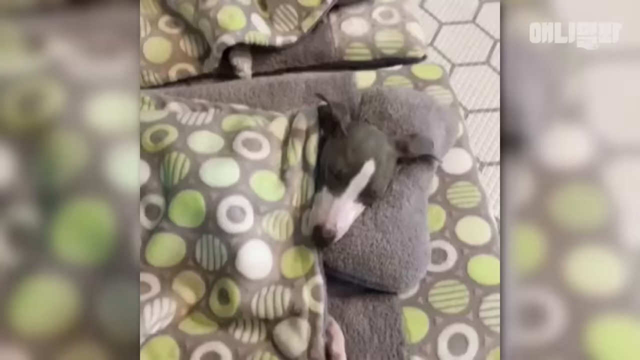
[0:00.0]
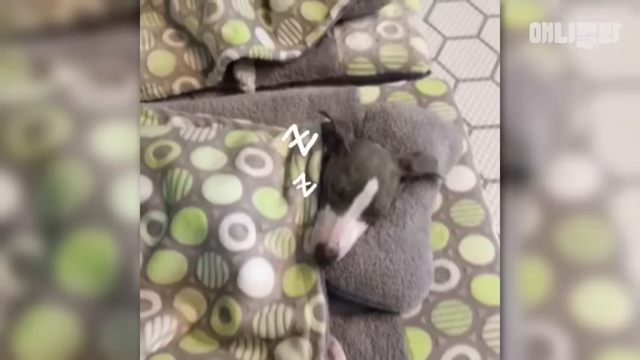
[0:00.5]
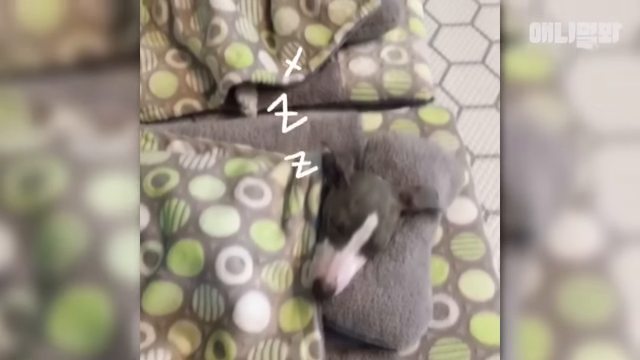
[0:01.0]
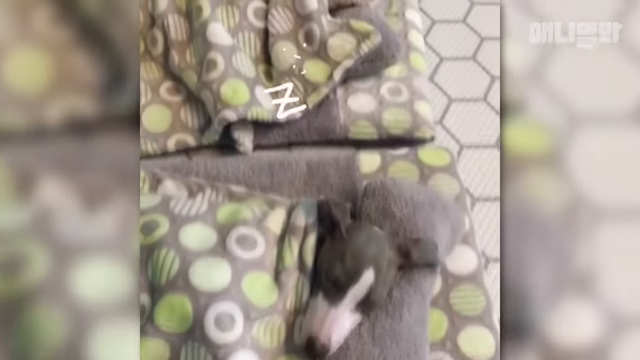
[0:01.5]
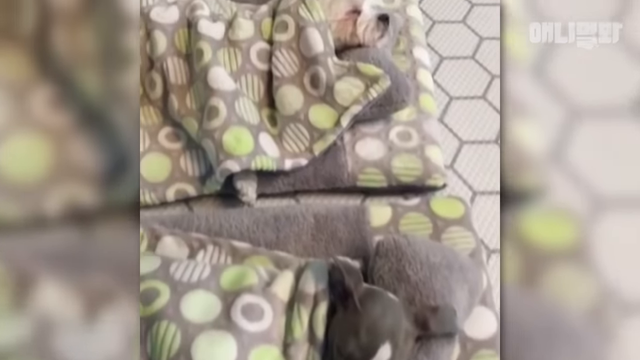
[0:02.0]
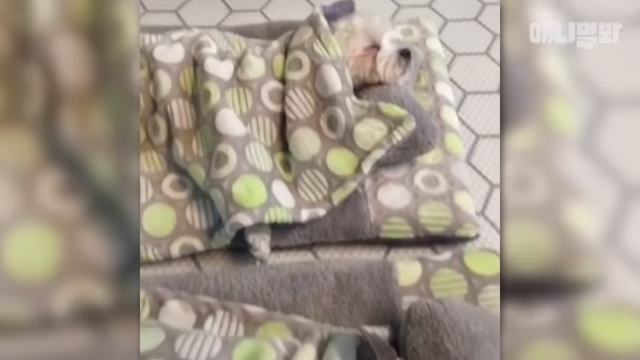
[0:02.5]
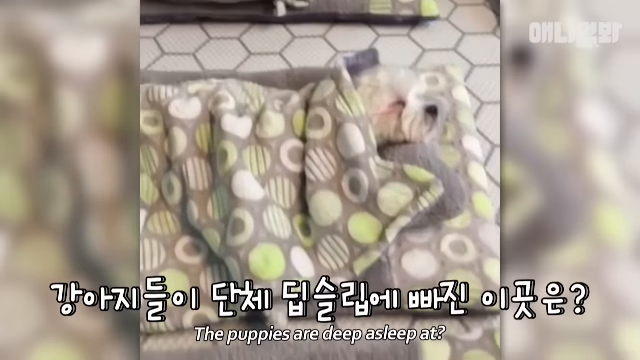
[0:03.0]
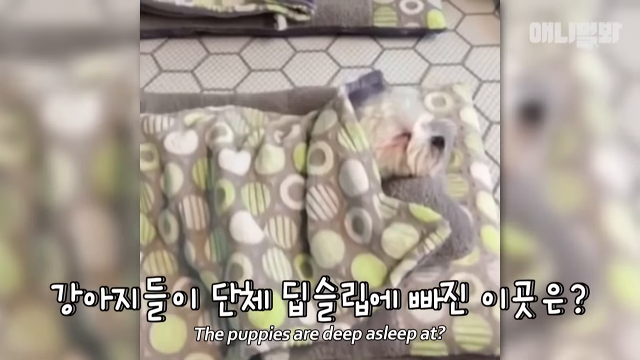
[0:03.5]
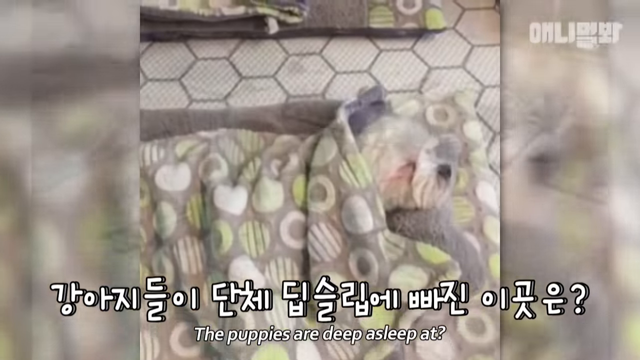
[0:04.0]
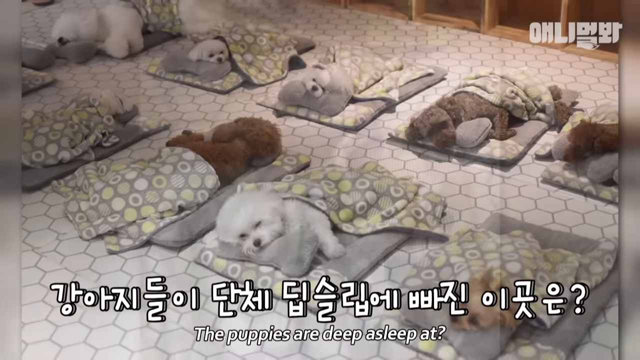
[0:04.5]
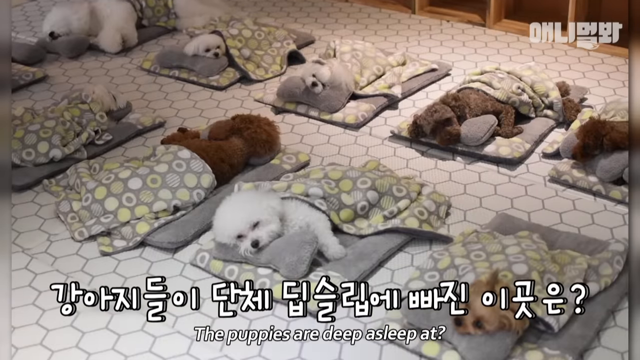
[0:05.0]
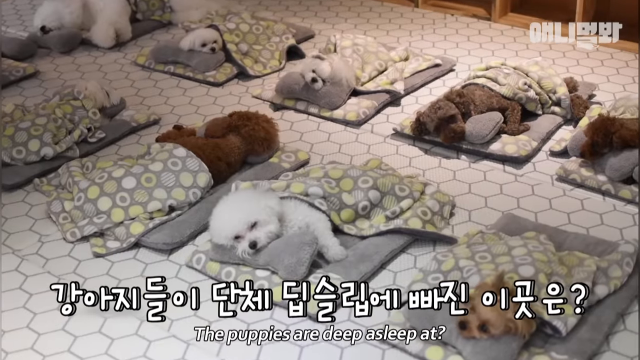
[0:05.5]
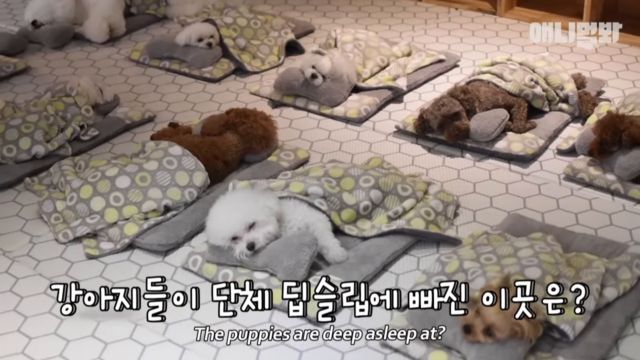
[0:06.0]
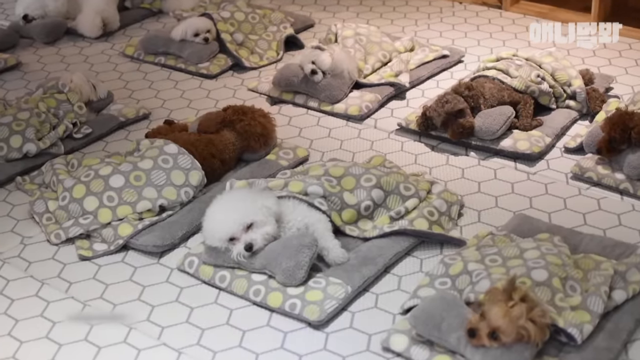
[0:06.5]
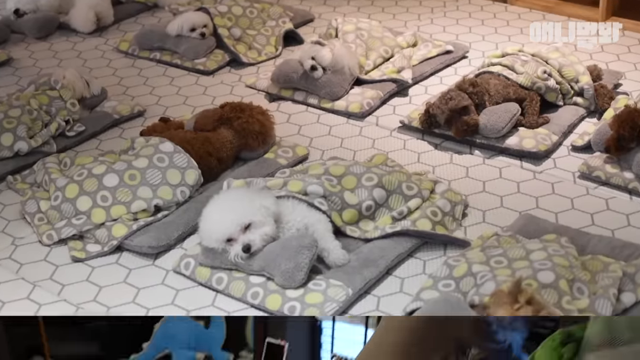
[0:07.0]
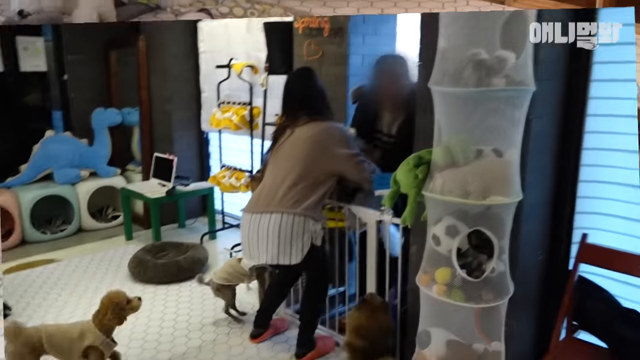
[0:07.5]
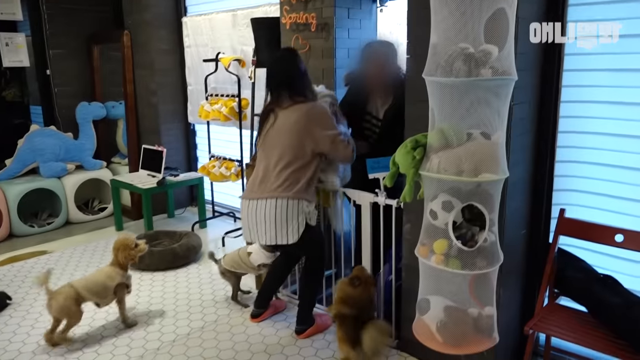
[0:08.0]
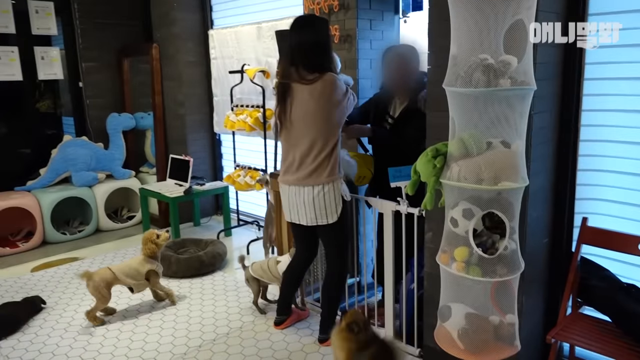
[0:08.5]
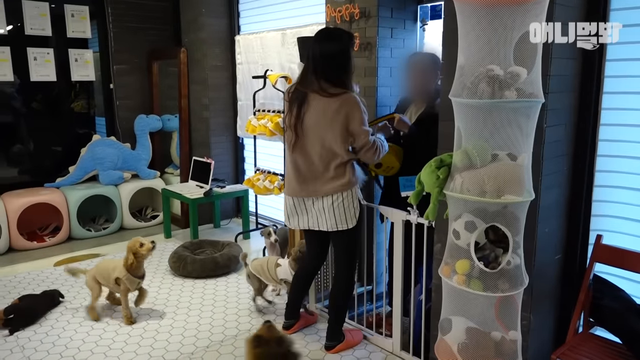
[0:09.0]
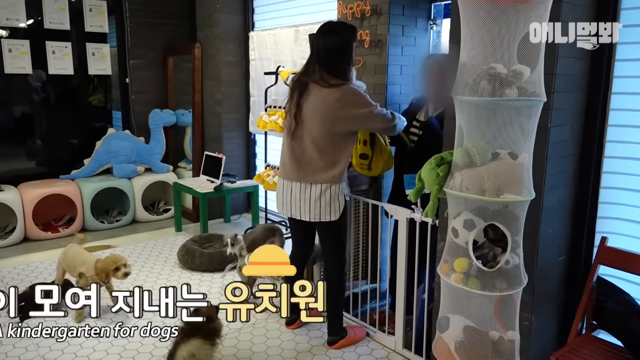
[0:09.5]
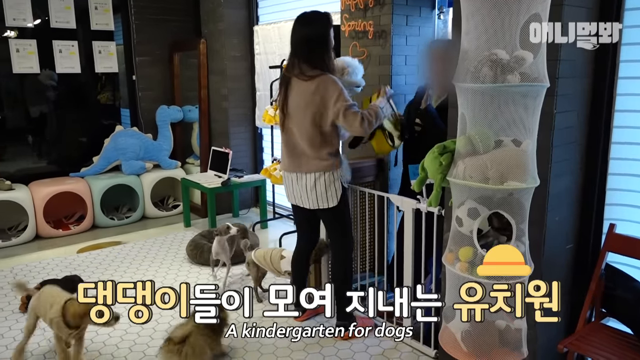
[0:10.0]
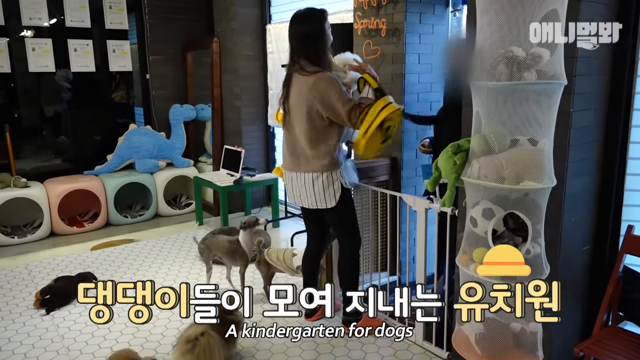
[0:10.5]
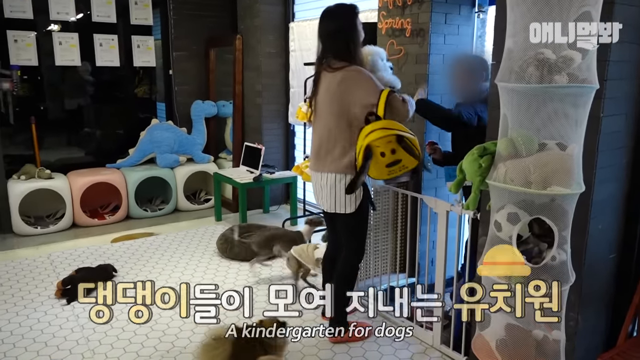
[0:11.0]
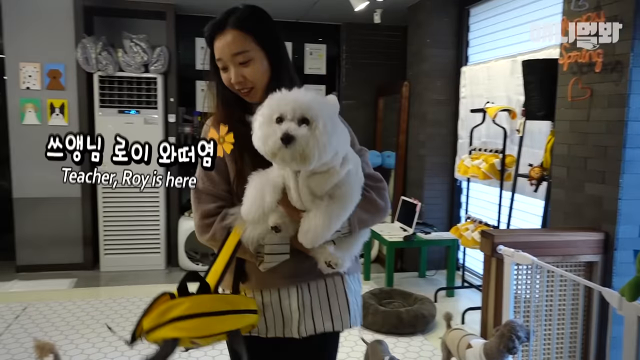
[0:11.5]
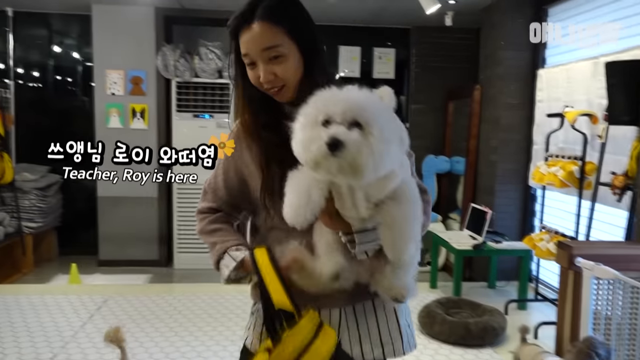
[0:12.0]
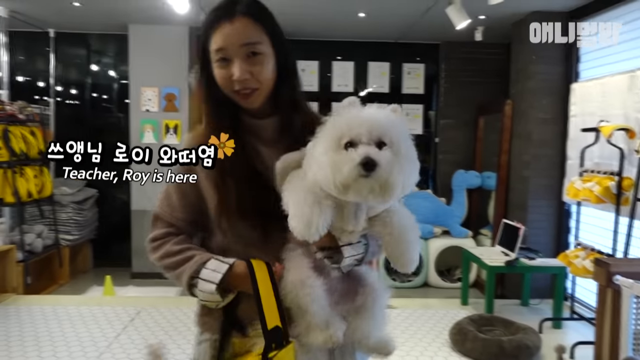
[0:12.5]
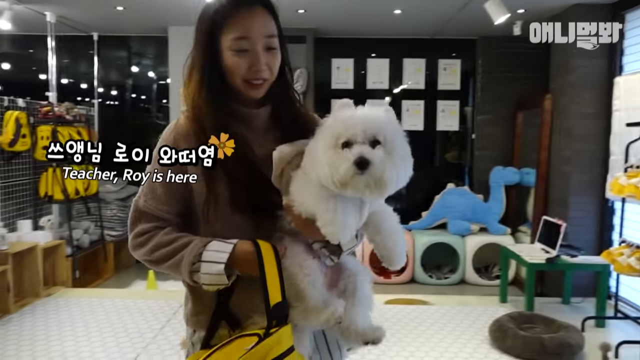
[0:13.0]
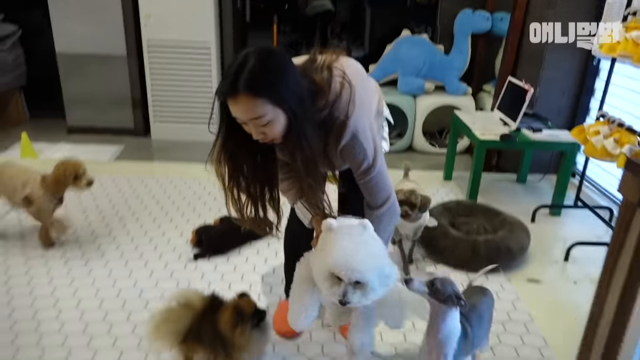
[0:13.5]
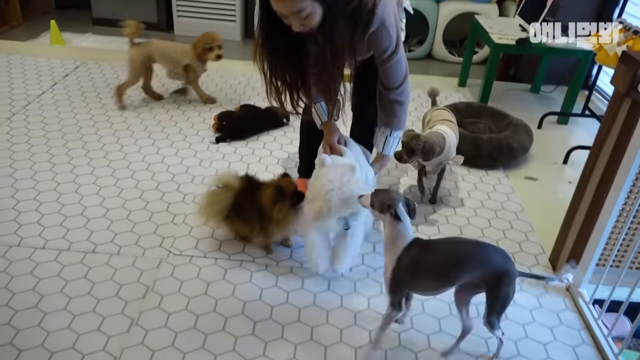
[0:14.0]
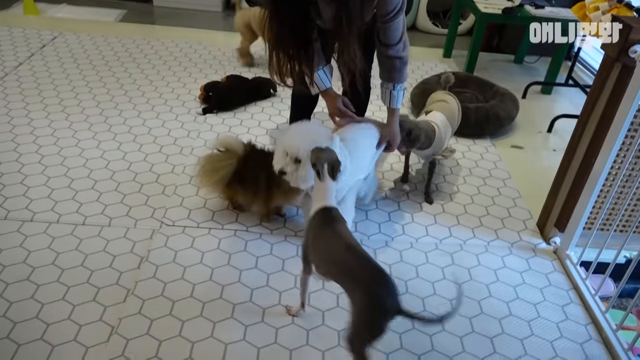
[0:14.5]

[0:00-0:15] At the start, a group of about five or six dogs lies on beds with blankets pulled over them and little pillows. The blankets are gray with polka dots, and the pillow is gray. In the next scene a teacher appears; her name looks like Roy. She holds the dogs and plays with them while they all jump around trying to get her attention, and some of them appear to be barking. The dogs are very excitable. One of the dogs she carries is very white and fluffy.